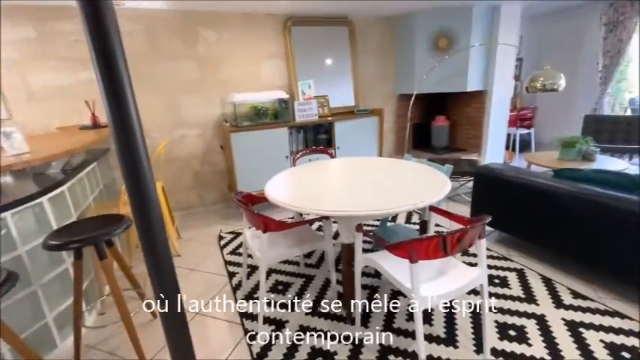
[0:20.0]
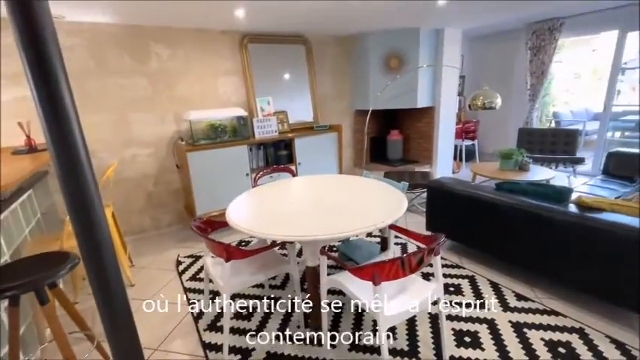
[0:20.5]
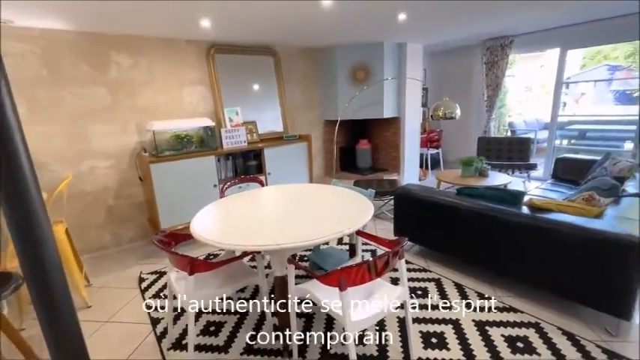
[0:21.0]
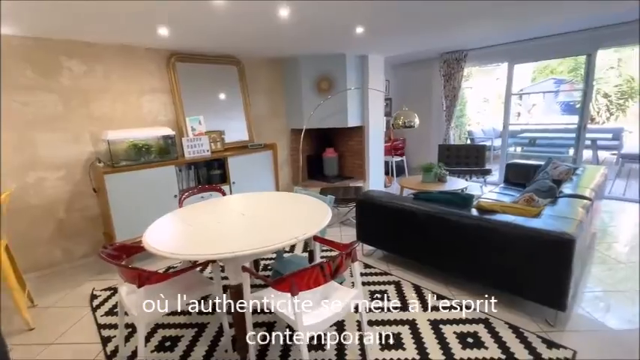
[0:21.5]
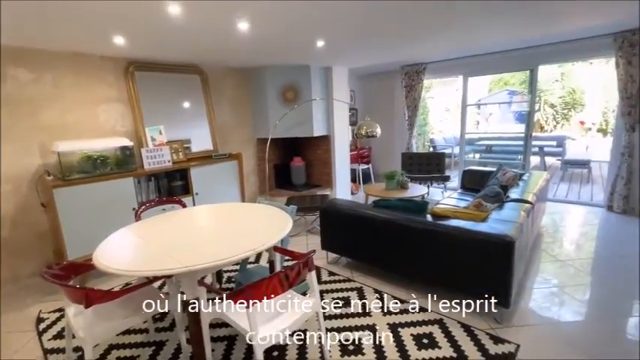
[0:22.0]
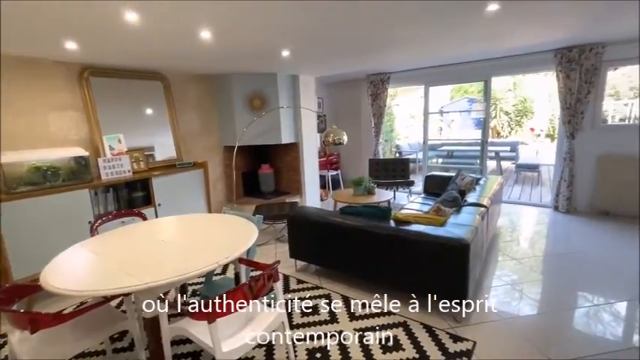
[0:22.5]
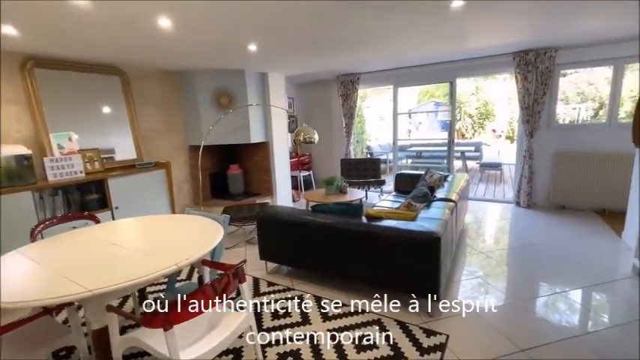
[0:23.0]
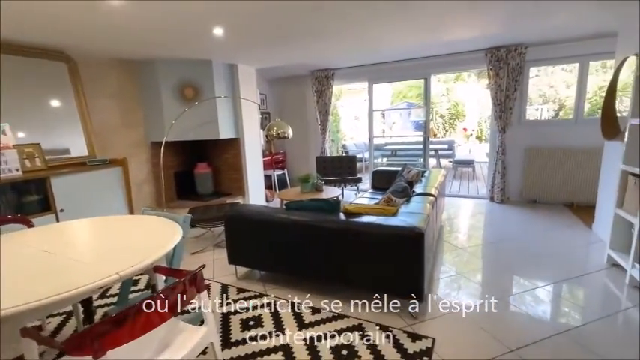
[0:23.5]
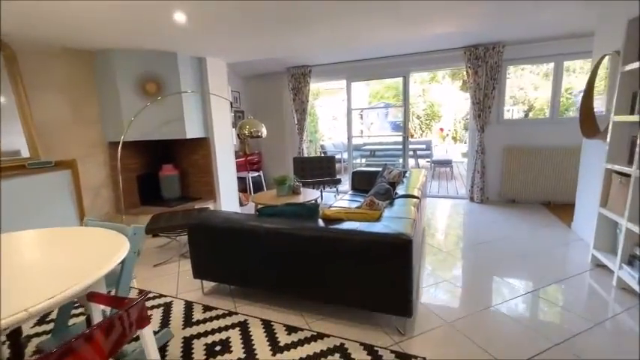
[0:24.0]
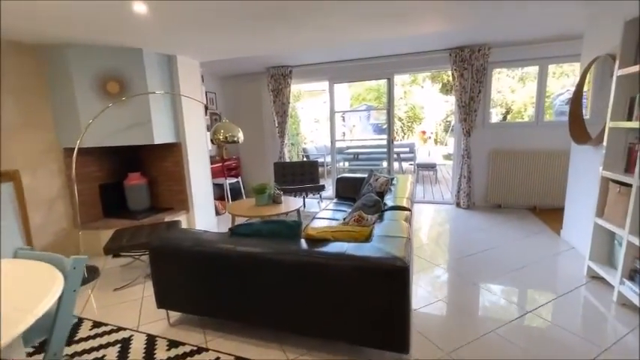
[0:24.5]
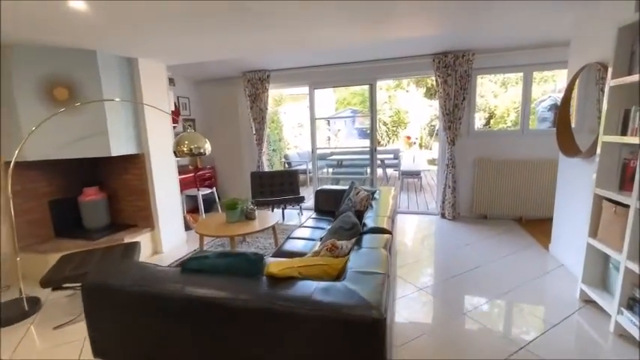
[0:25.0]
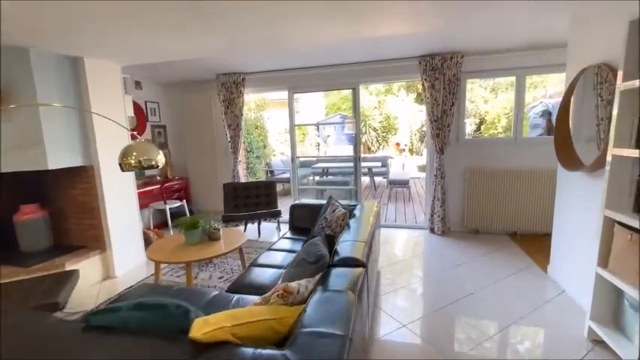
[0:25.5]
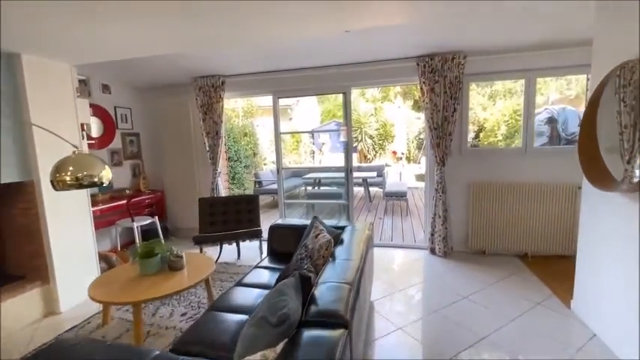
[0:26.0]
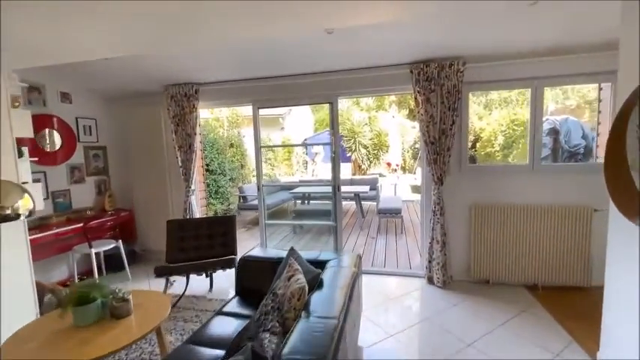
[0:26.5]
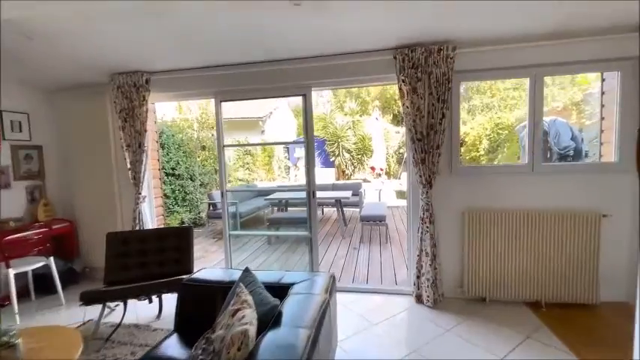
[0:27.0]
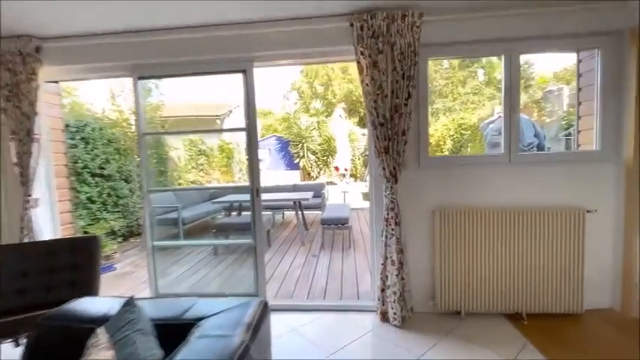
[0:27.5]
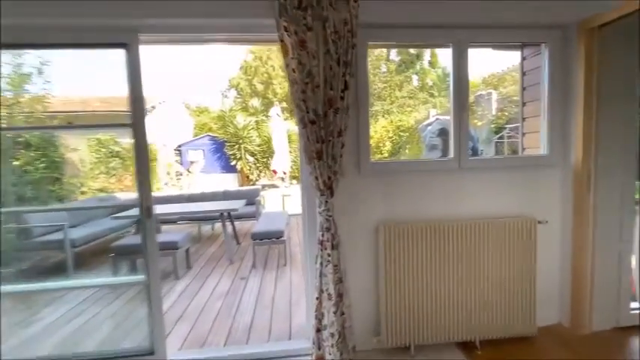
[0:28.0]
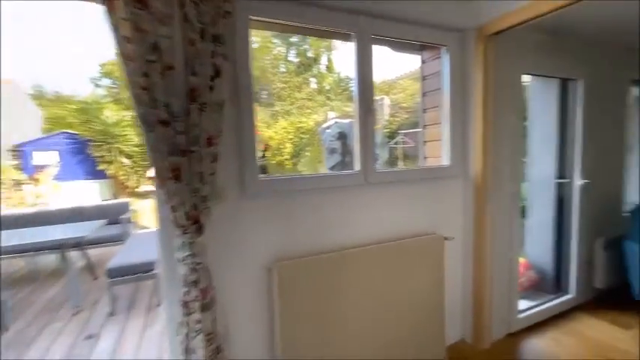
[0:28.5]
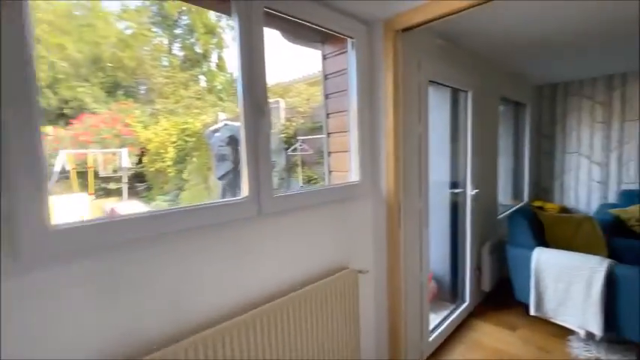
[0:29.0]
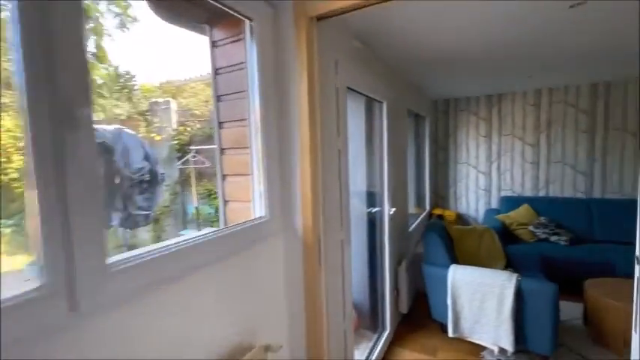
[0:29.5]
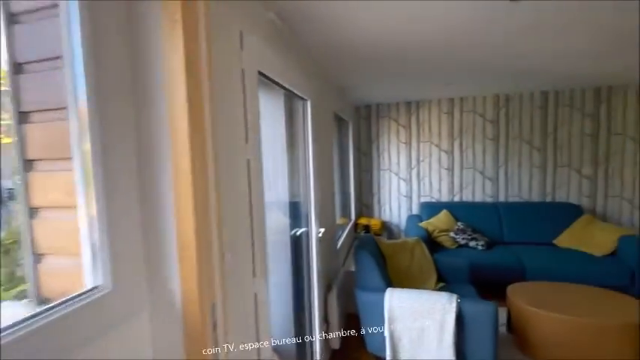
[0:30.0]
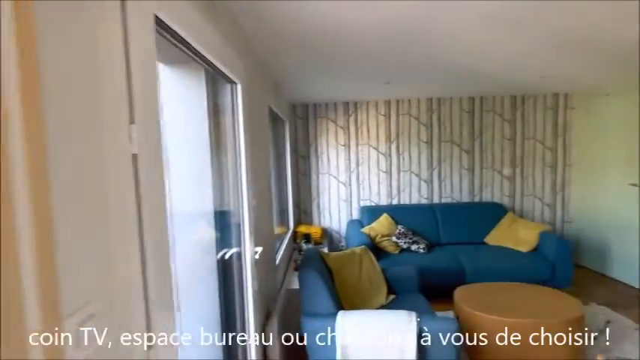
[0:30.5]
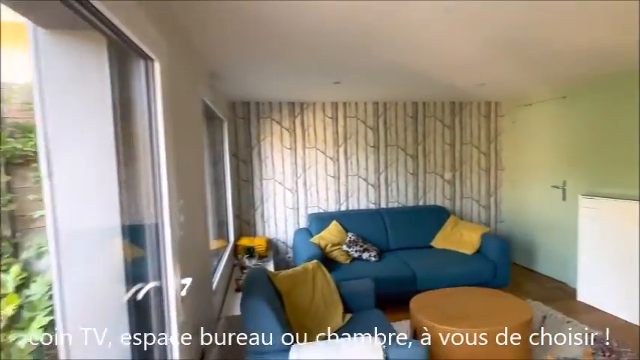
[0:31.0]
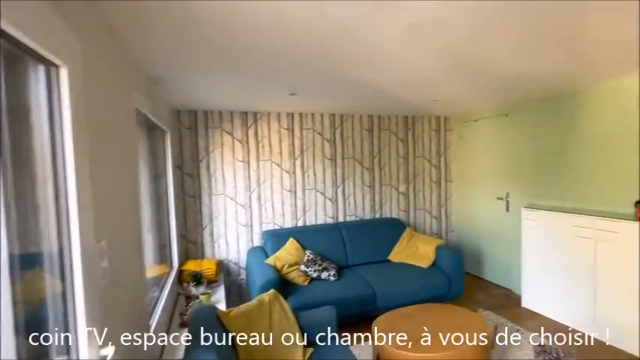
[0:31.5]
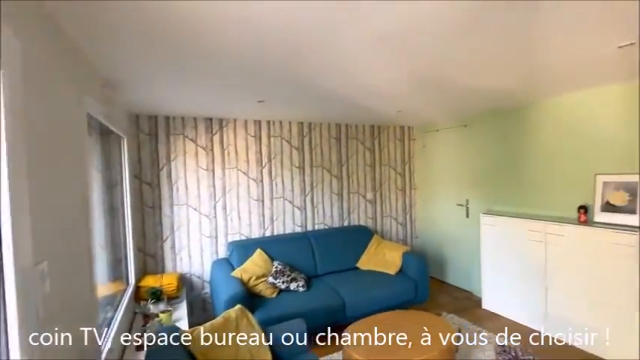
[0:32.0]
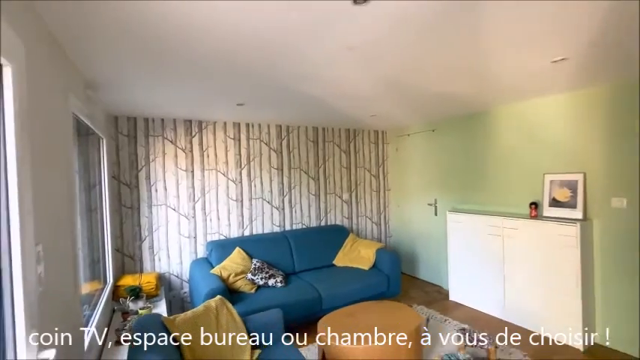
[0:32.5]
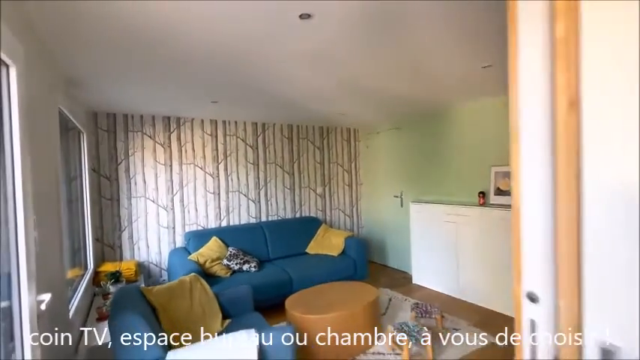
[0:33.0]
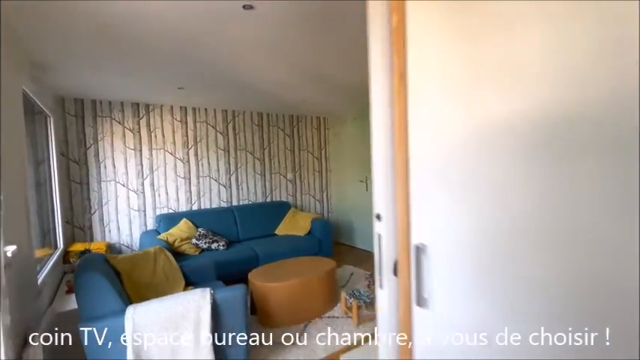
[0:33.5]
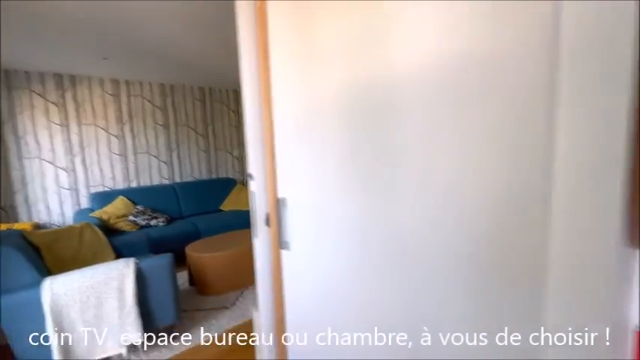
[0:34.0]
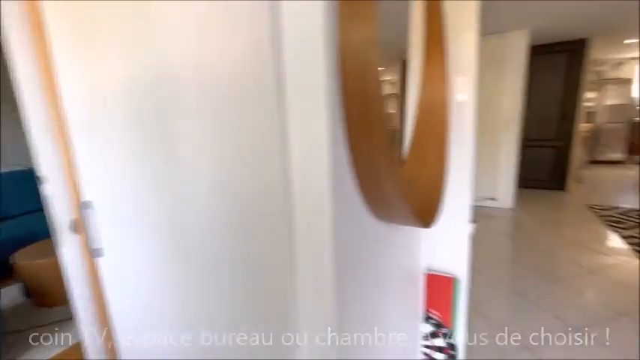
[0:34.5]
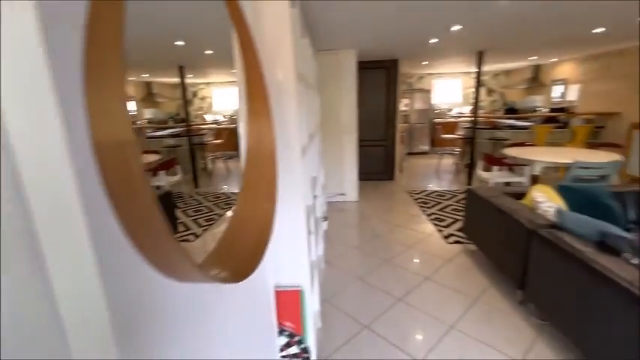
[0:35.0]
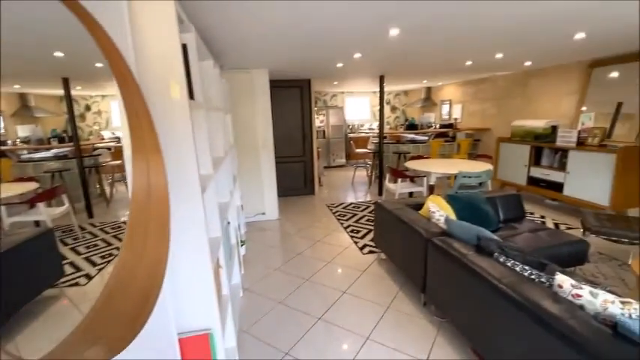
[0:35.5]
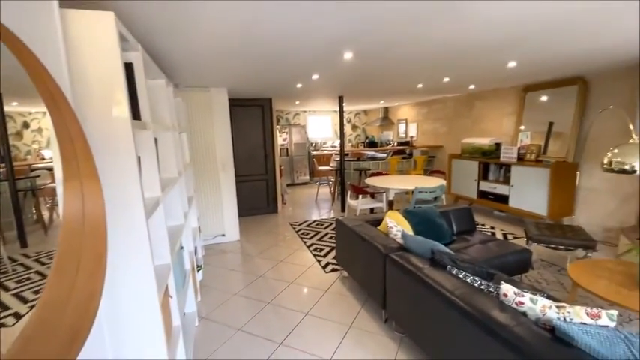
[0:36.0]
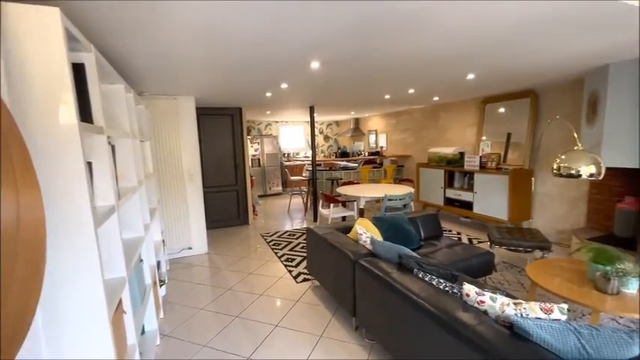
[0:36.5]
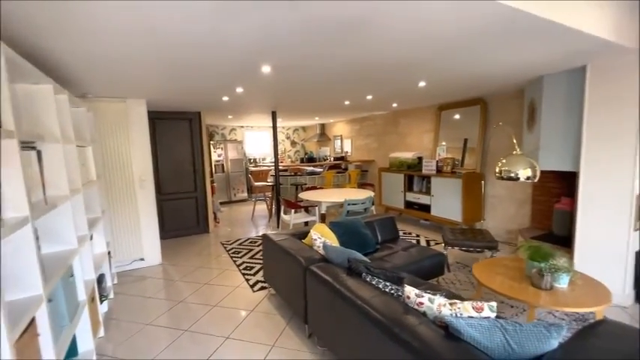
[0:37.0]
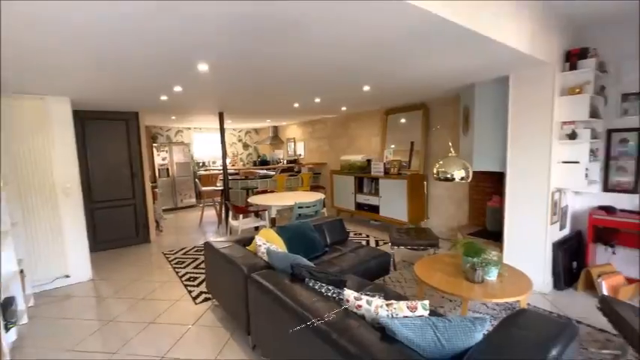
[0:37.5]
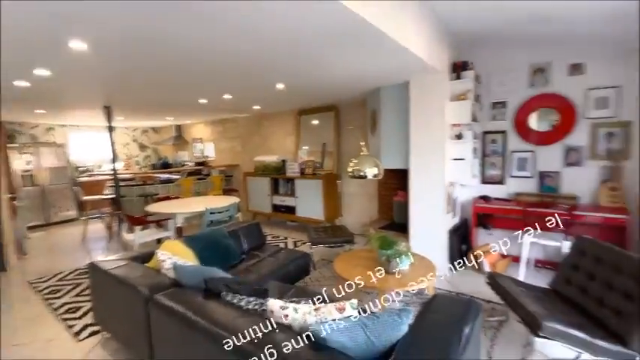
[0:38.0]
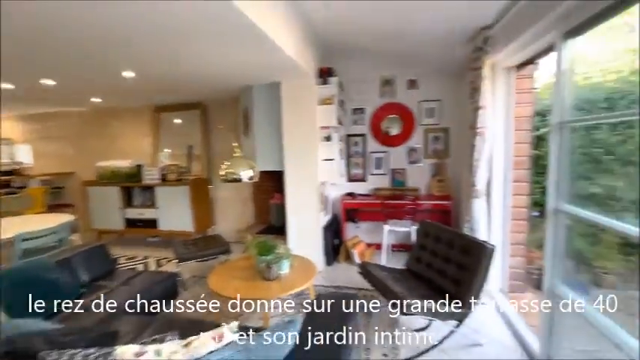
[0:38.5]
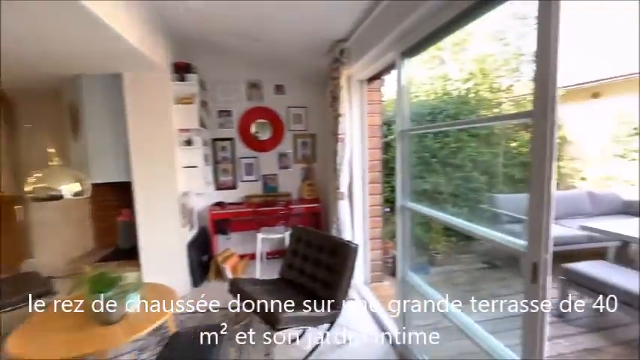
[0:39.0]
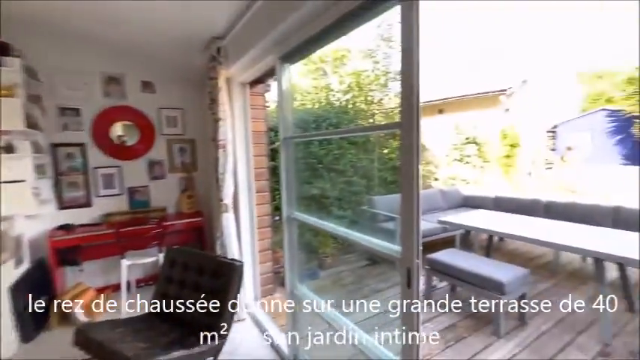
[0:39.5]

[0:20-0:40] The camera shows the same room. The dining table is a small, perhaps plastic, circular table with three small chairs surrounding it and a fourth chair of a different type on the right side. A black and white rug is underneath the table. In the far corner of the room there is a fireplace, and to the left of that is what appears to be an entertainment center with perhaps an aquarium on top of it. On the right side, a corner couch sits out in the open. The camera pans right past the couch and gets close to a set of glass sliding doors that lead outside, where there appears to be an outdoor patio with padded seats on a wooden deck. The camera turns right and goes into what appears to be another living area with two-seat sofas and a small coffee table in the center. It turns right again, slightly past a mirror in the wall, to show the living area and the kitchen from another angle.